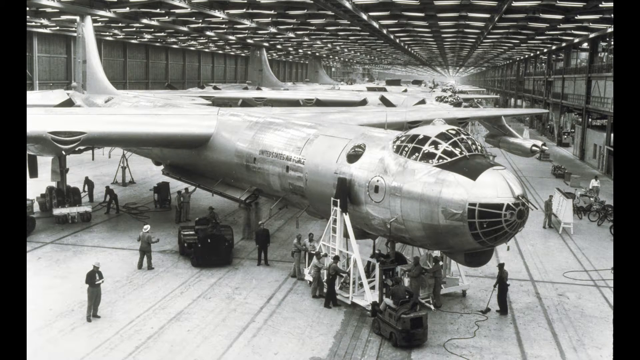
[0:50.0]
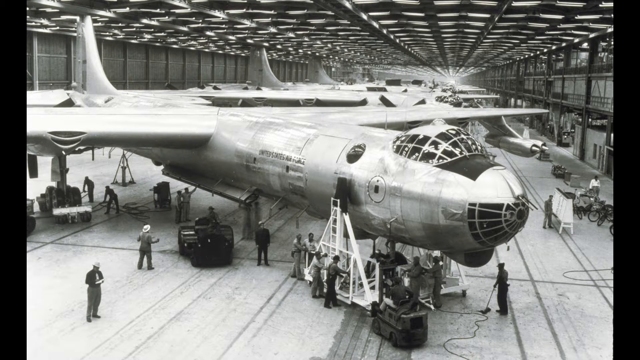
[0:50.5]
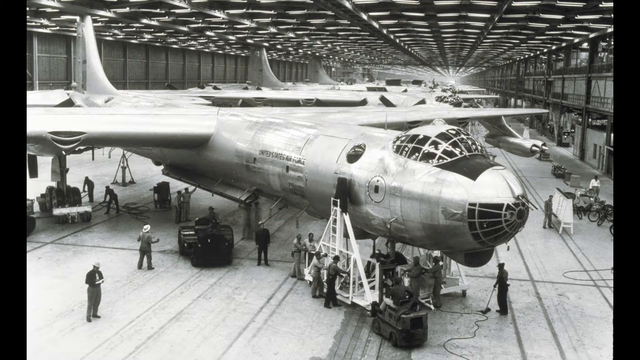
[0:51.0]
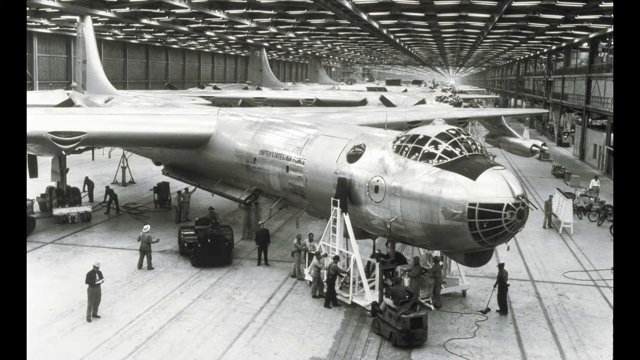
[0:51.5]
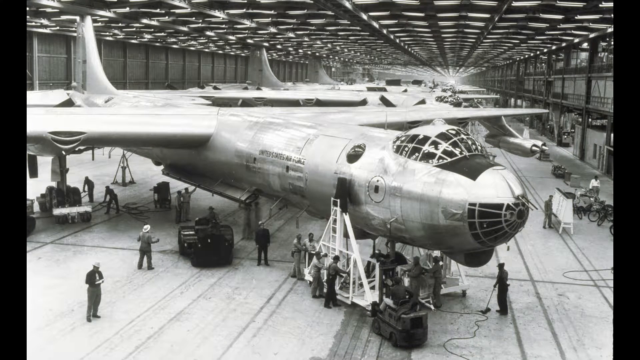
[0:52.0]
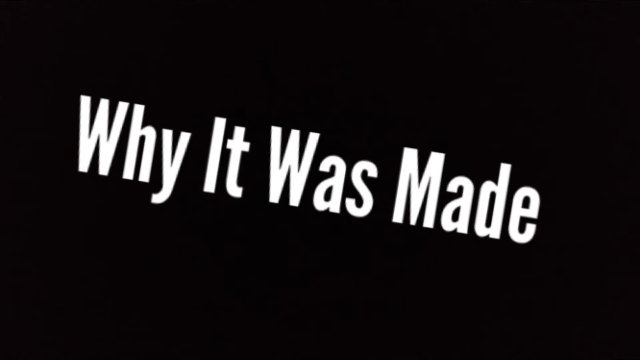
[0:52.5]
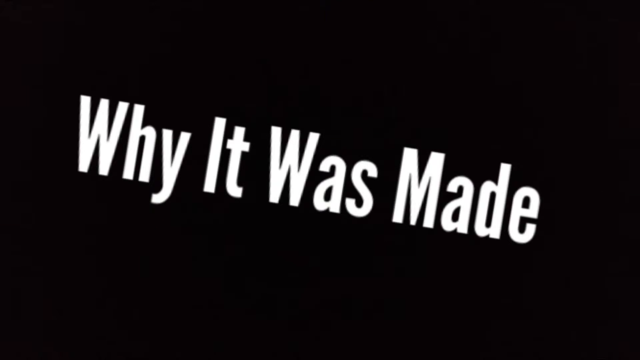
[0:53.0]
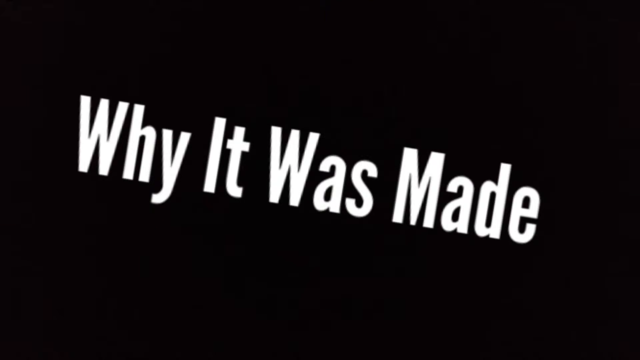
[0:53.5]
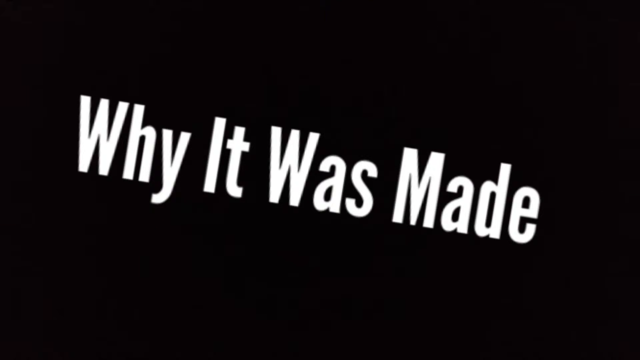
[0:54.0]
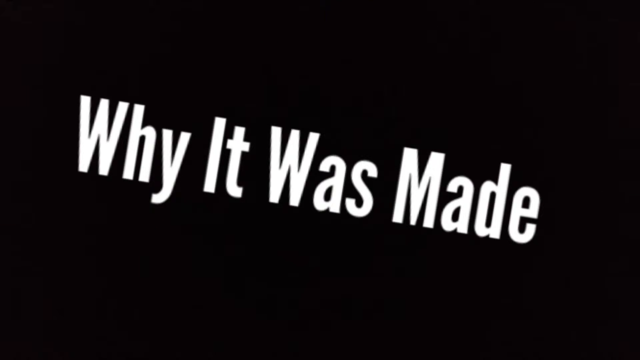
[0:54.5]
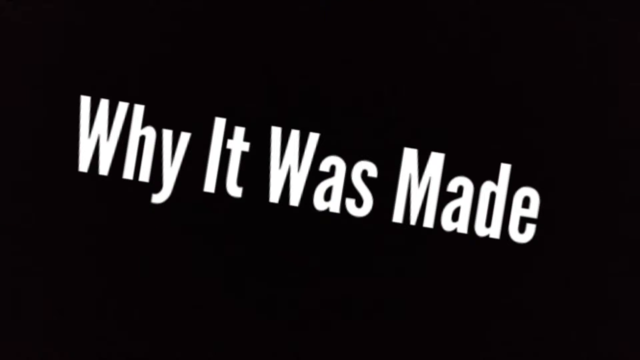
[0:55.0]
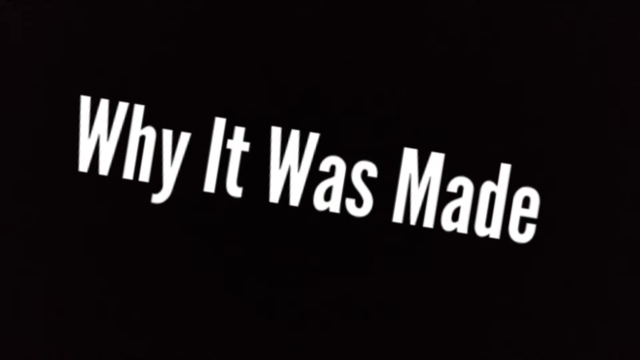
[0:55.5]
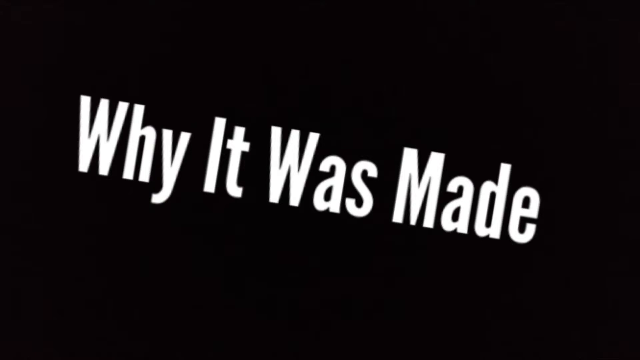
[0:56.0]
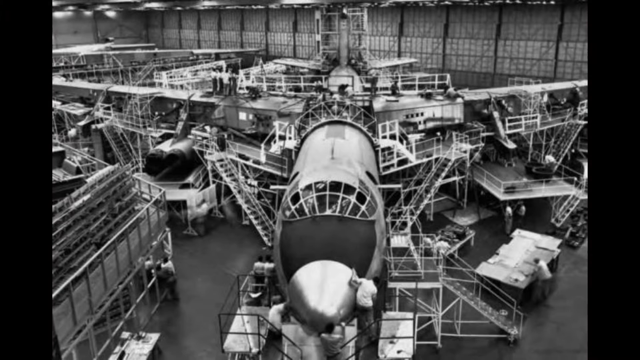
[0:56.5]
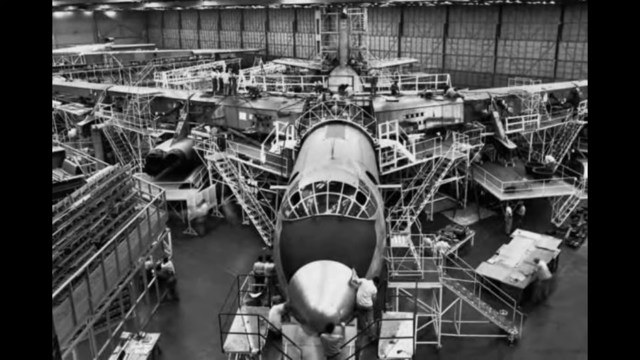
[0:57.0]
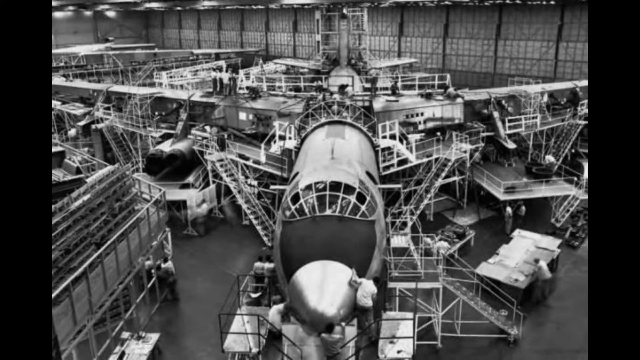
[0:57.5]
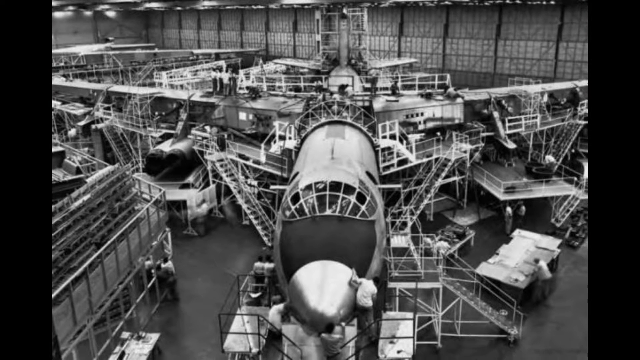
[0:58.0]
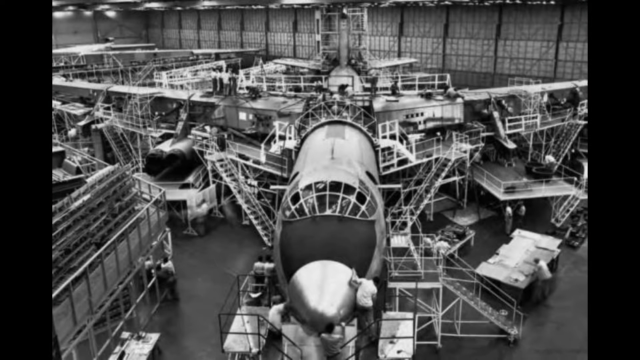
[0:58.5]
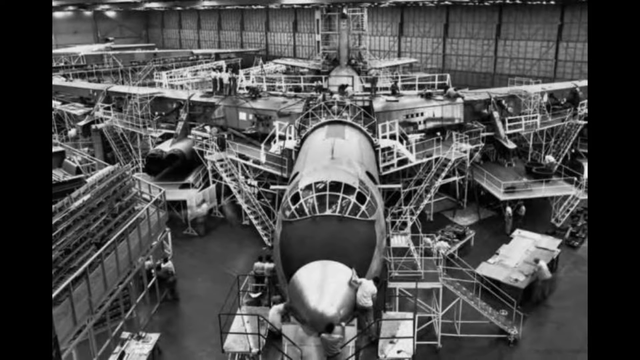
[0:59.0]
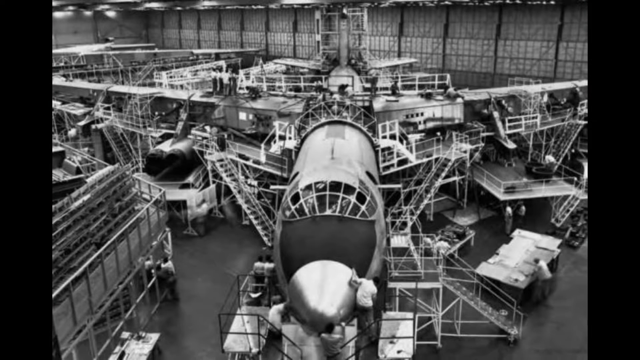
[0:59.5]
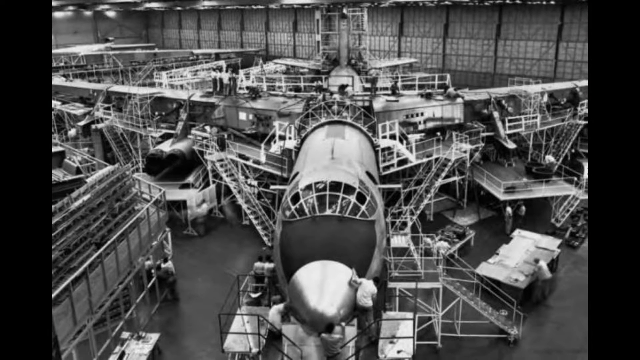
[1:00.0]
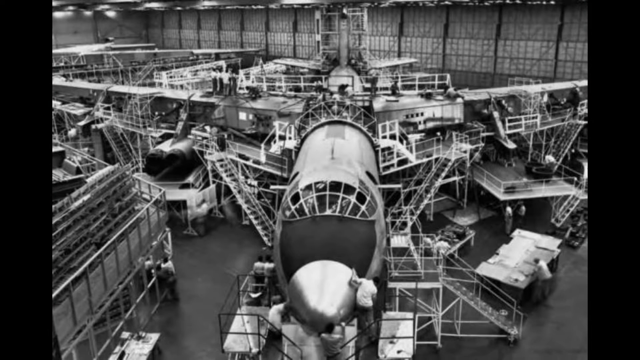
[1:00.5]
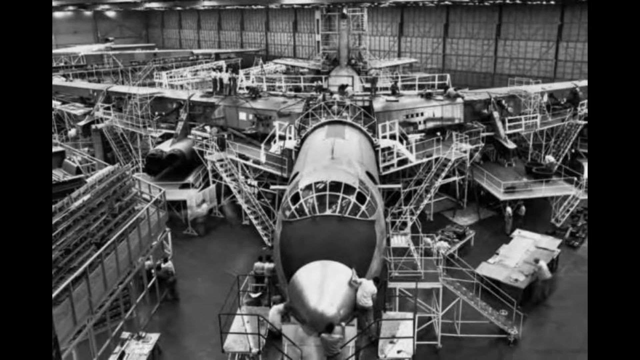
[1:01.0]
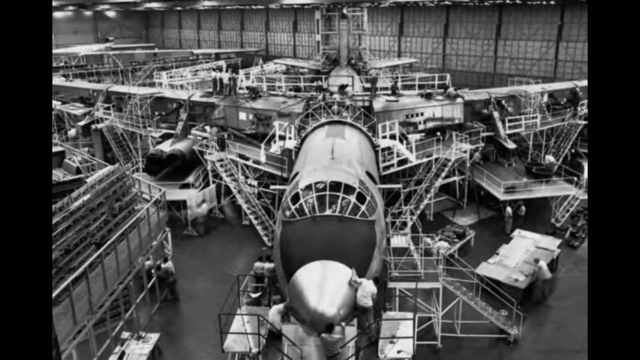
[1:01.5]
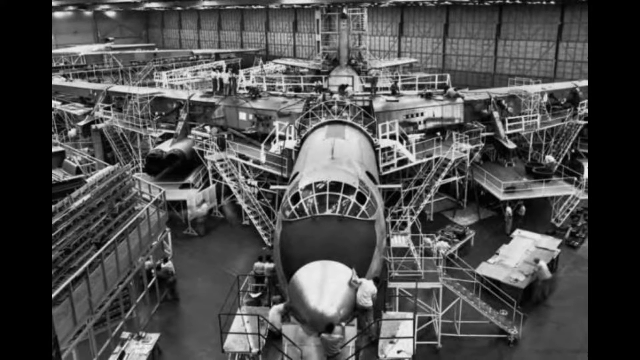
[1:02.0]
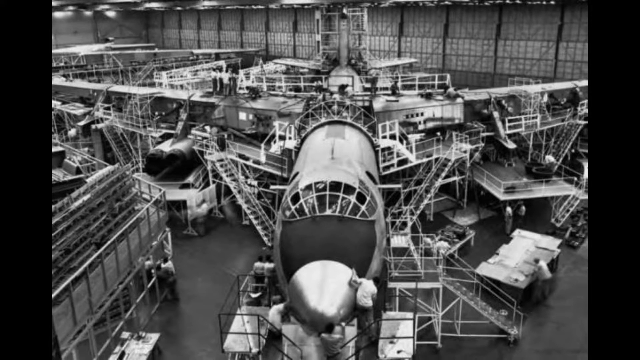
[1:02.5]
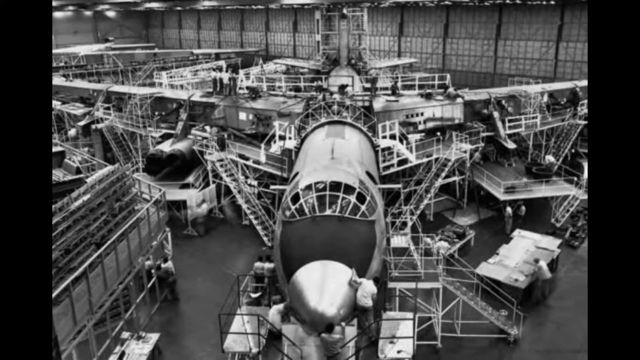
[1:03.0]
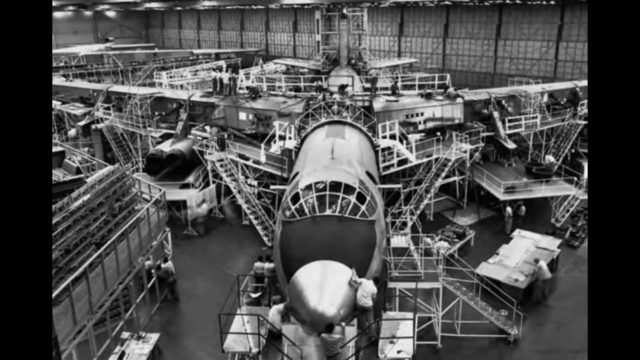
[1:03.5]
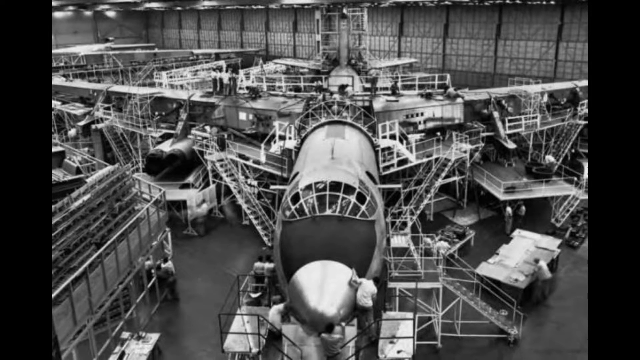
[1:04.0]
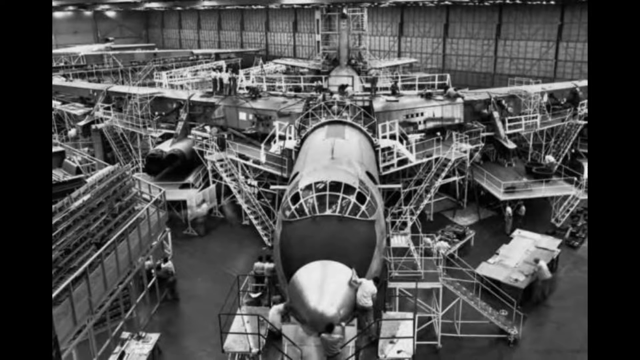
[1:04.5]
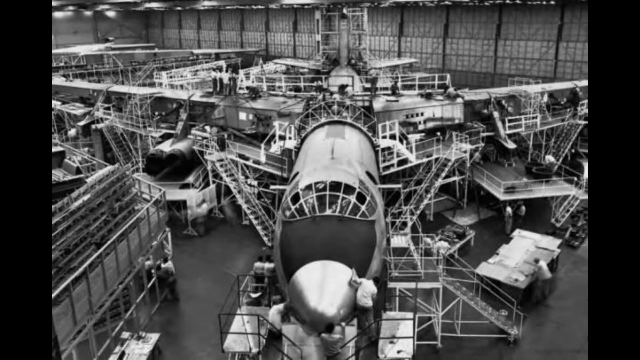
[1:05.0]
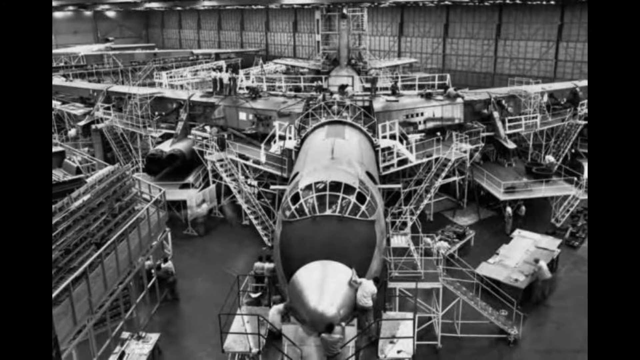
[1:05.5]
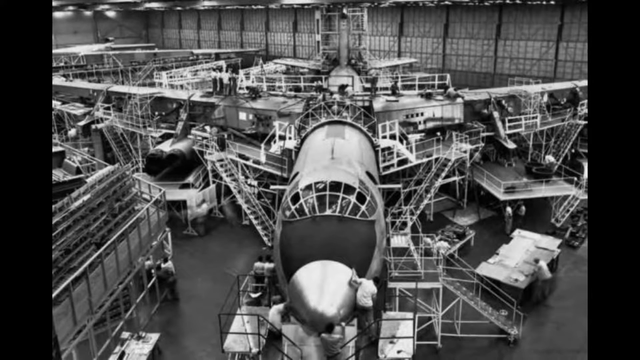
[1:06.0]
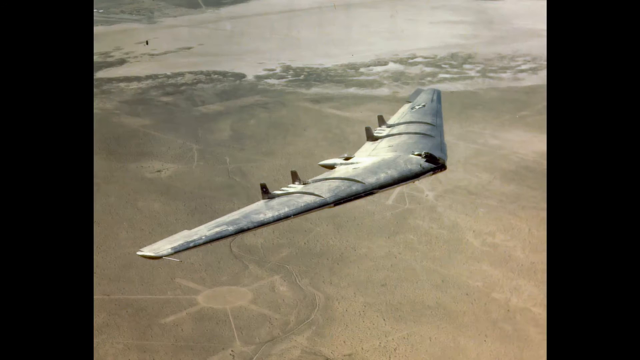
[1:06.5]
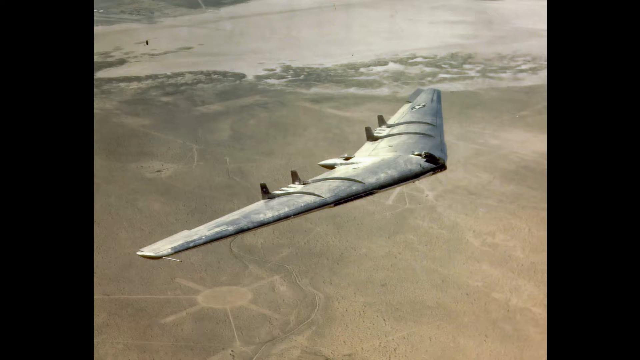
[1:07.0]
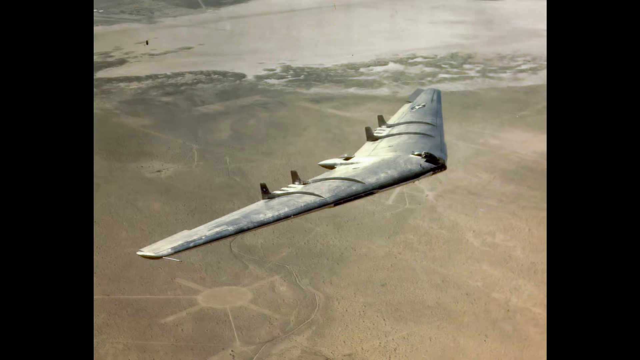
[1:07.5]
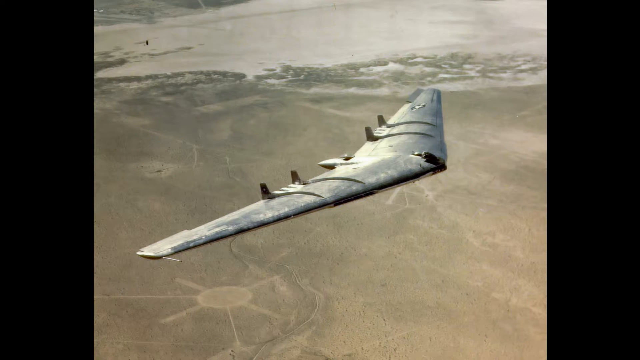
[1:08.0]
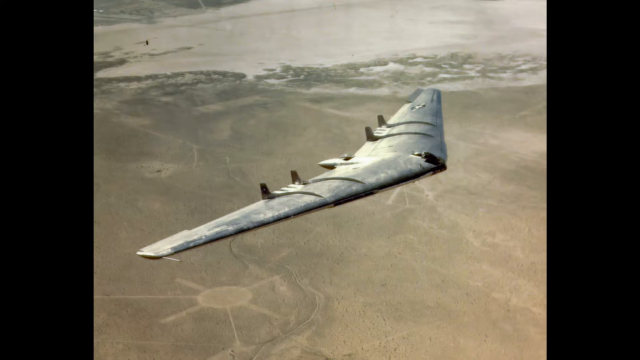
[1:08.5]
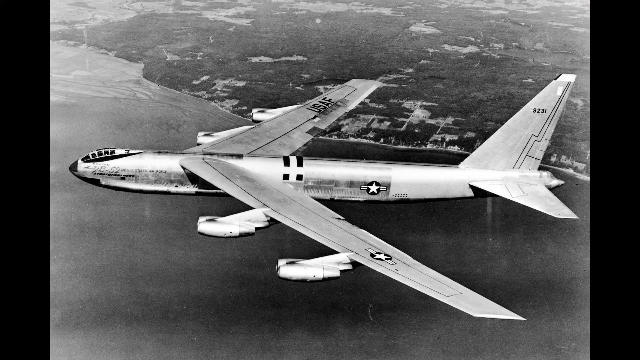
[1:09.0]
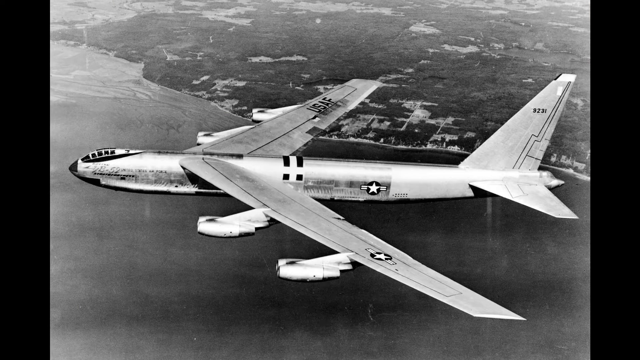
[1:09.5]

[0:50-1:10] A still image shows the aircraft in a hangar, followed by a title card reading "why was it made?" Another still of the aircraft in the hangar shows a number of engineers, technicians, maintenance people and workers around the aircraft and in other sections, working on it; they appear to be either constructing a new aircraft or performing maintenance on an existing one. Some key parts are missing: from the front-facing view, some windows are absent. One man is working directly at the front of the aircraft, standing with another man directly in front of the nose. Next is an image that looks like just the wings of the B-36 in flight, with no other part attached, making it look somewhat like a UFO; it appears to be flying high in the sky, seen from a view similar to that from an airplane window.